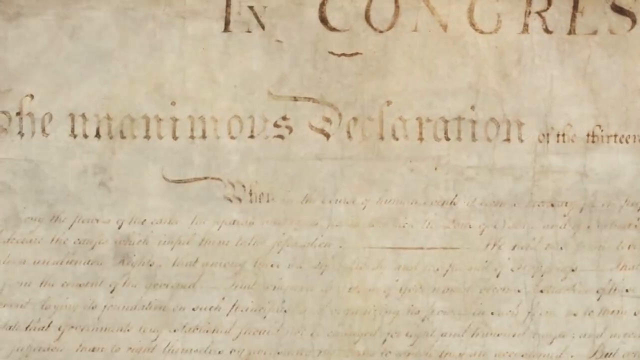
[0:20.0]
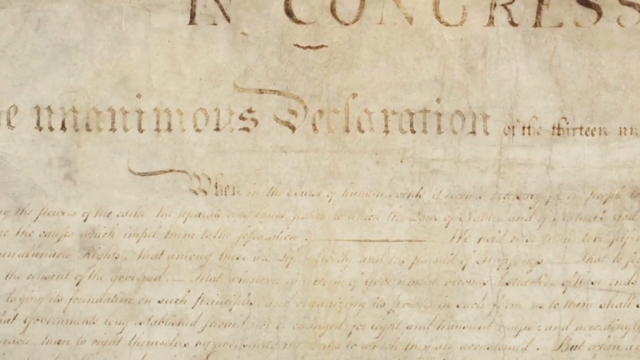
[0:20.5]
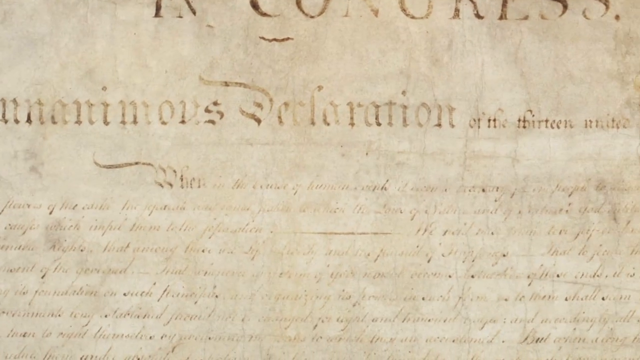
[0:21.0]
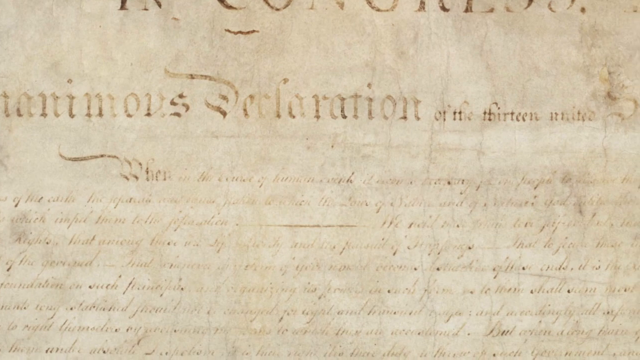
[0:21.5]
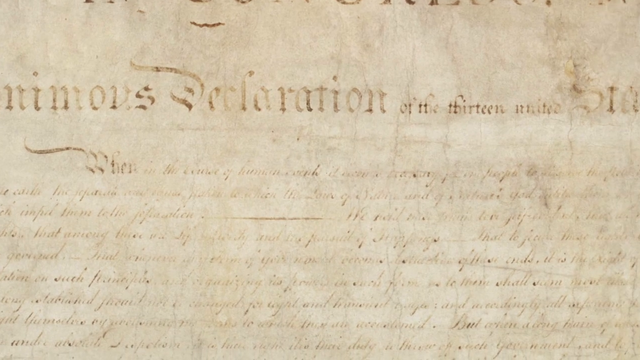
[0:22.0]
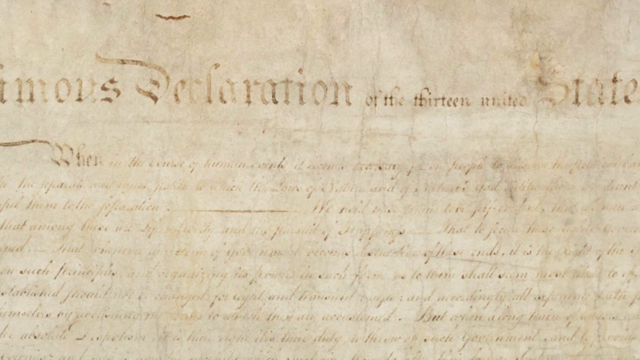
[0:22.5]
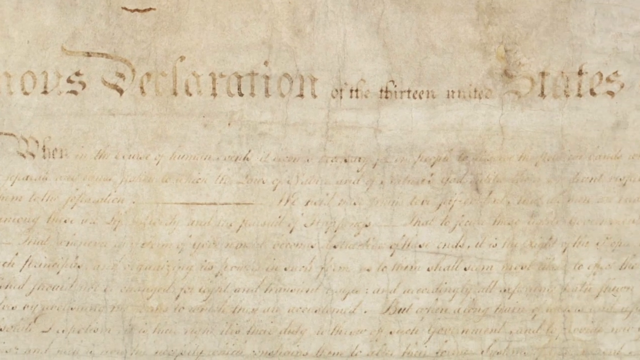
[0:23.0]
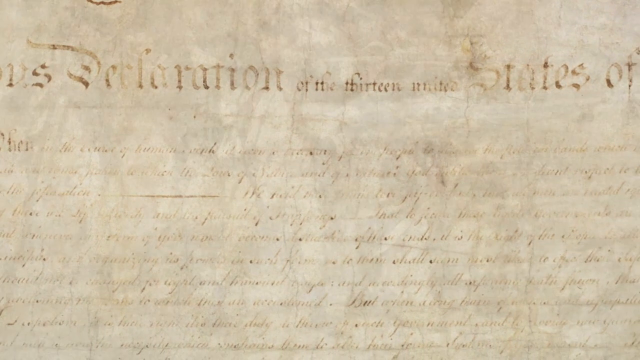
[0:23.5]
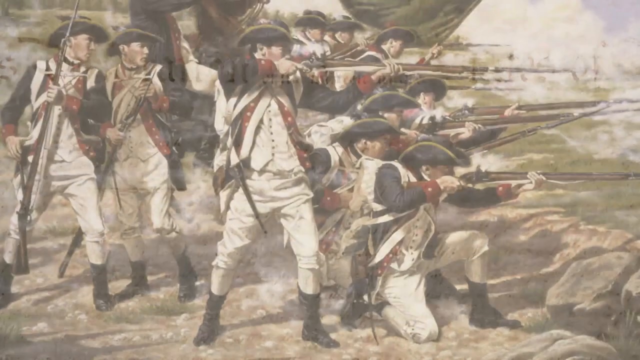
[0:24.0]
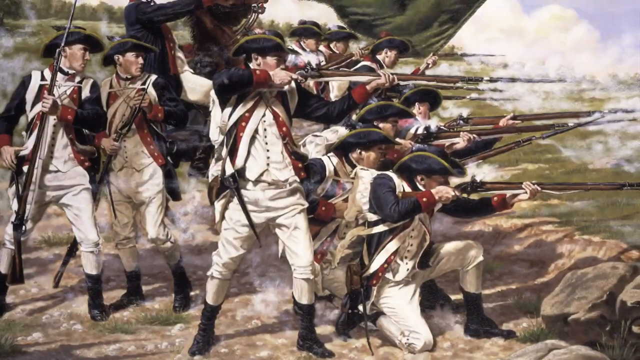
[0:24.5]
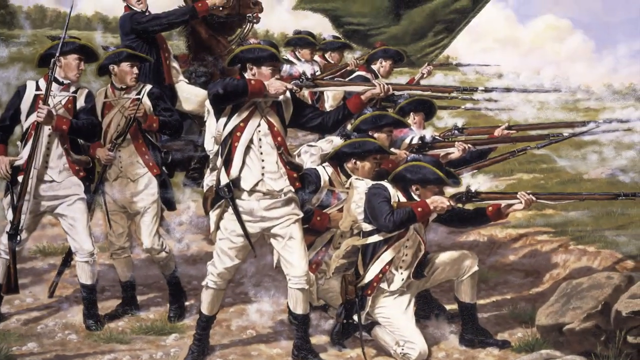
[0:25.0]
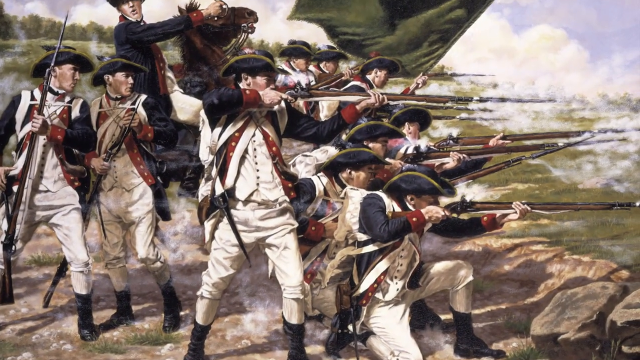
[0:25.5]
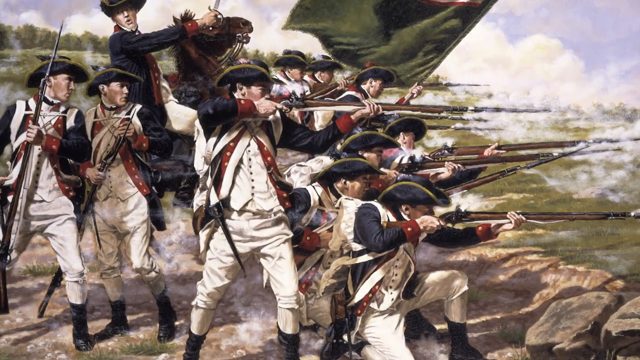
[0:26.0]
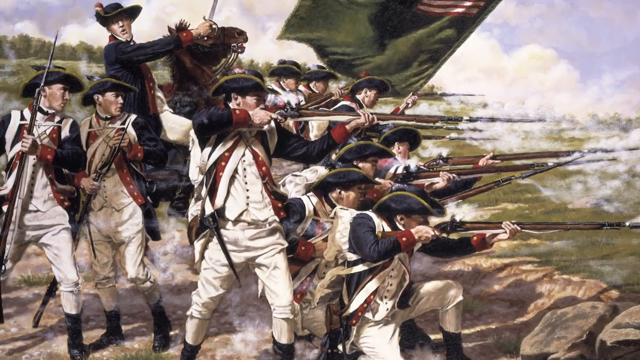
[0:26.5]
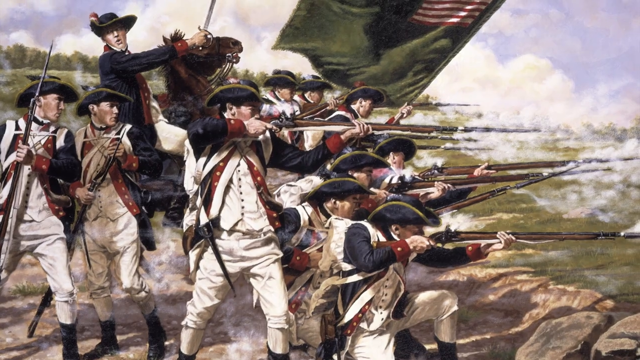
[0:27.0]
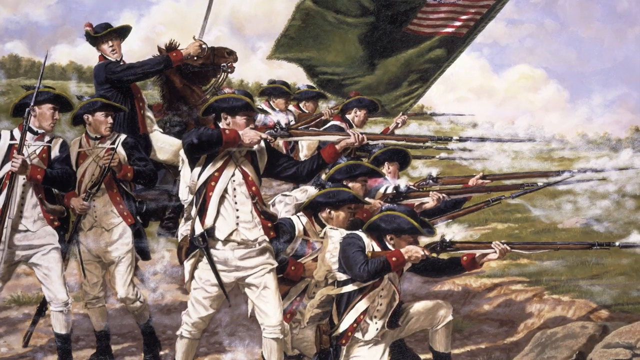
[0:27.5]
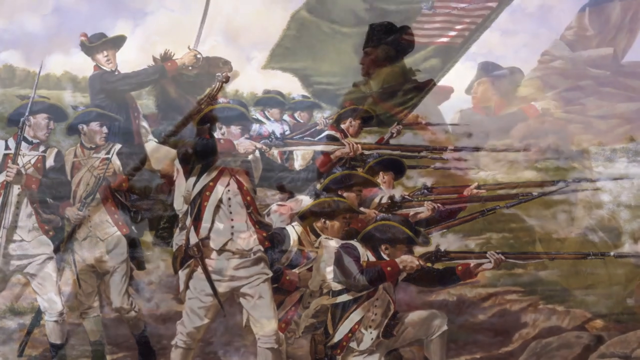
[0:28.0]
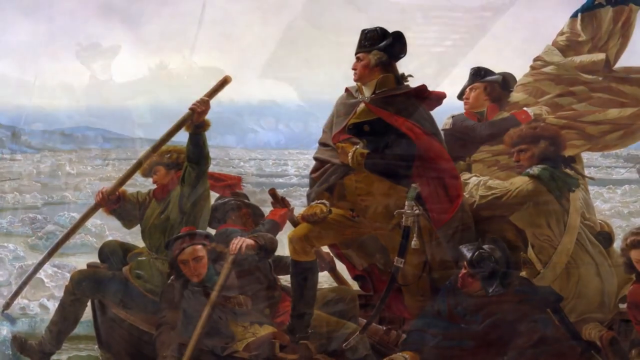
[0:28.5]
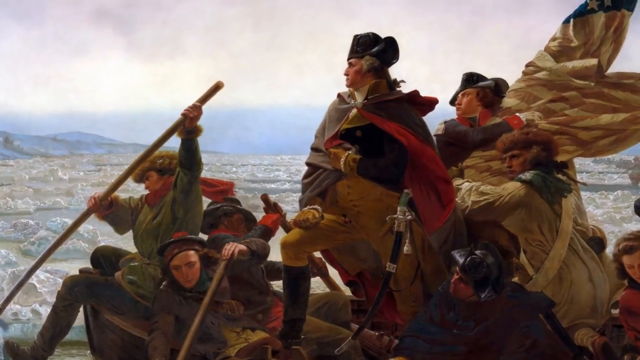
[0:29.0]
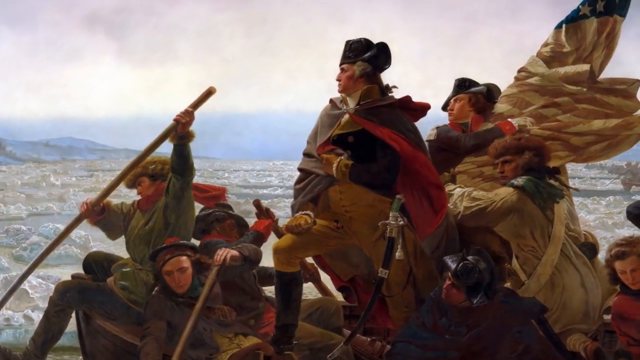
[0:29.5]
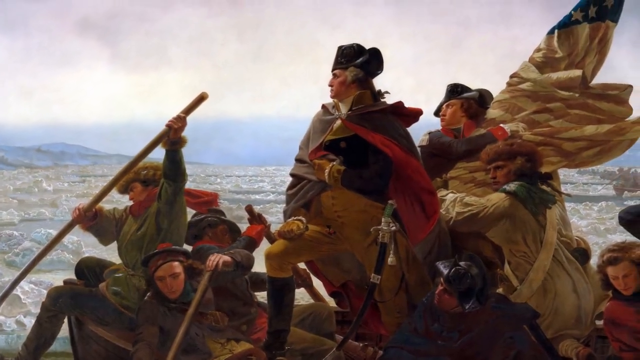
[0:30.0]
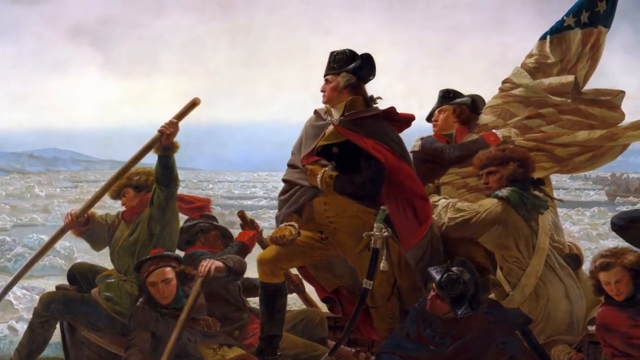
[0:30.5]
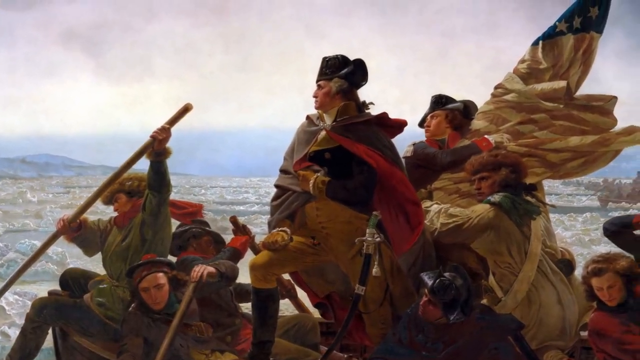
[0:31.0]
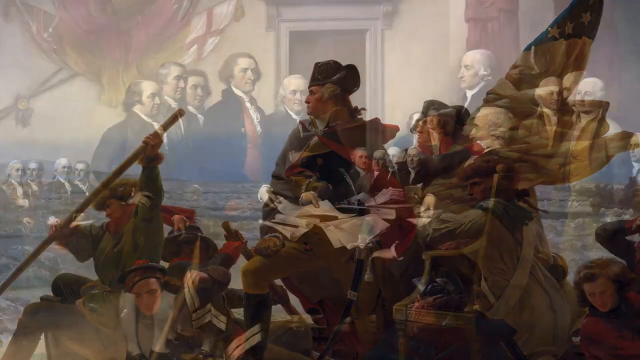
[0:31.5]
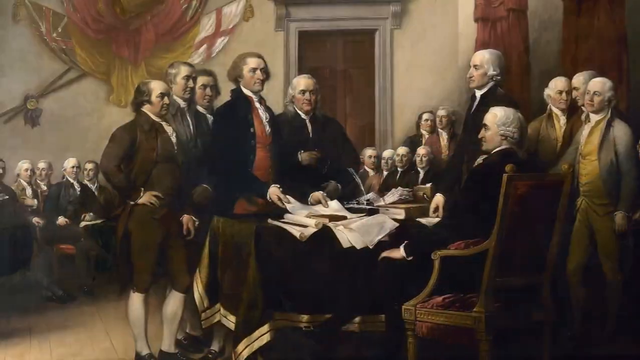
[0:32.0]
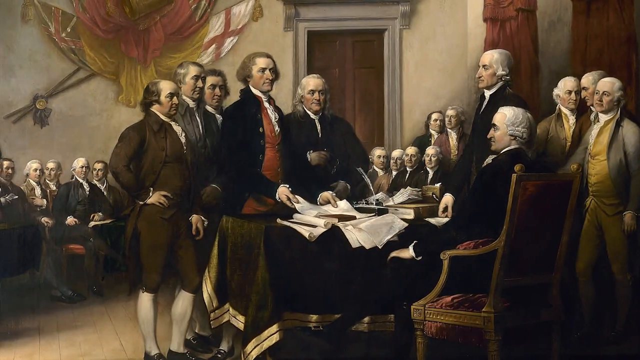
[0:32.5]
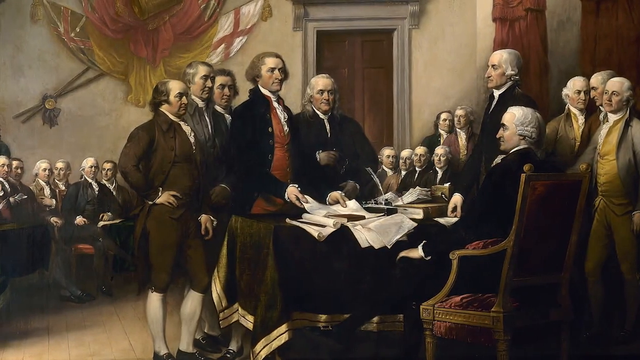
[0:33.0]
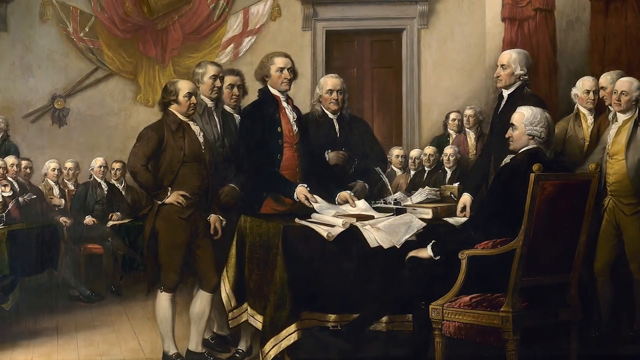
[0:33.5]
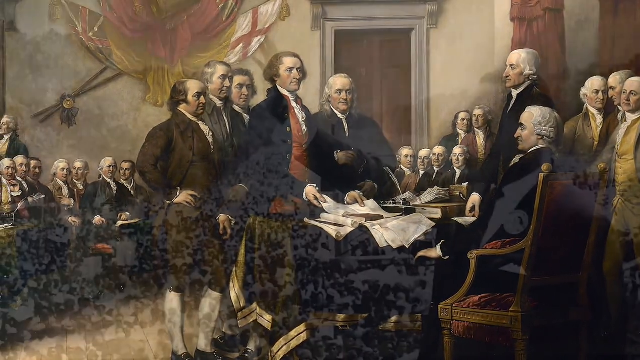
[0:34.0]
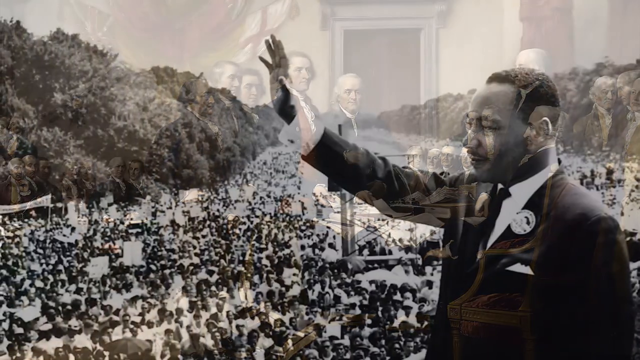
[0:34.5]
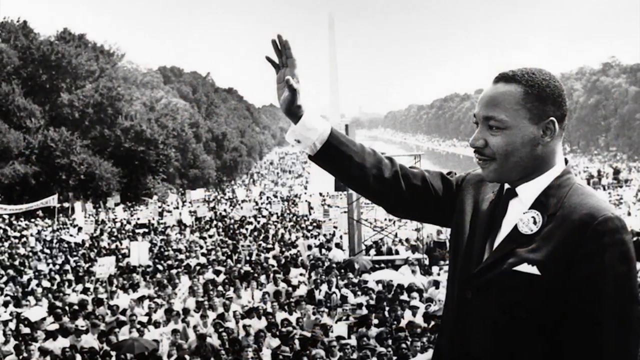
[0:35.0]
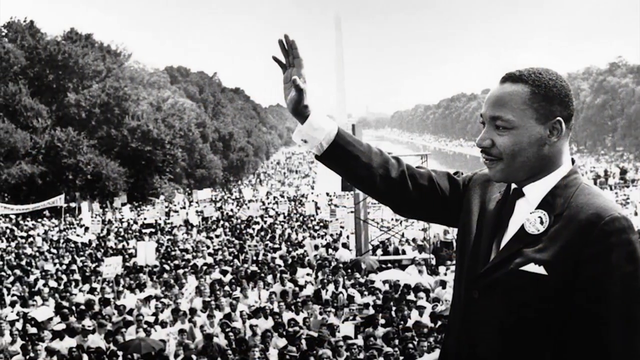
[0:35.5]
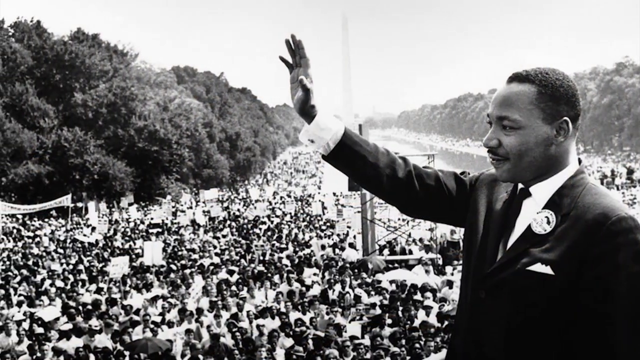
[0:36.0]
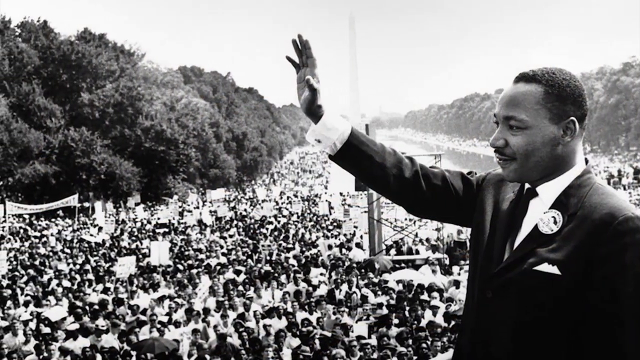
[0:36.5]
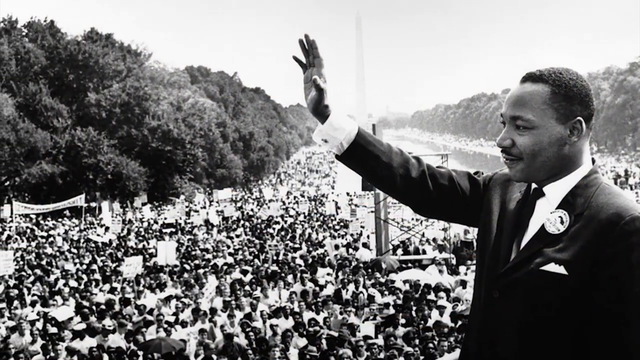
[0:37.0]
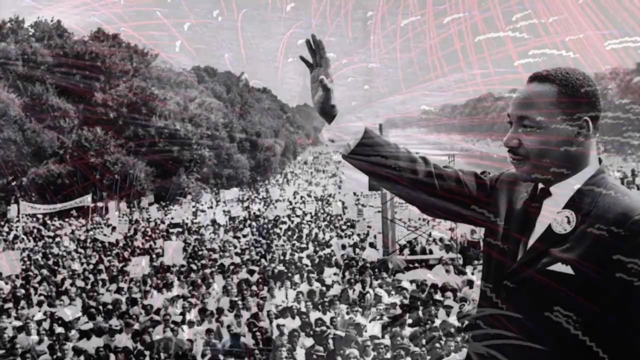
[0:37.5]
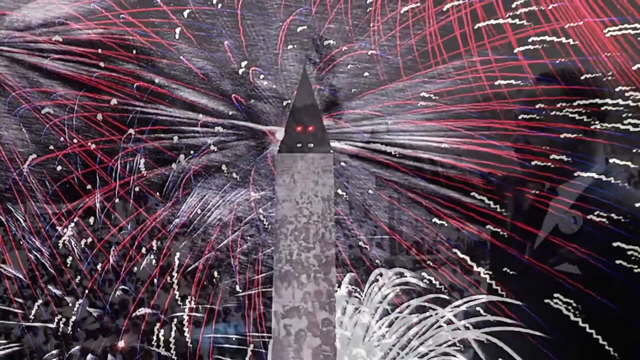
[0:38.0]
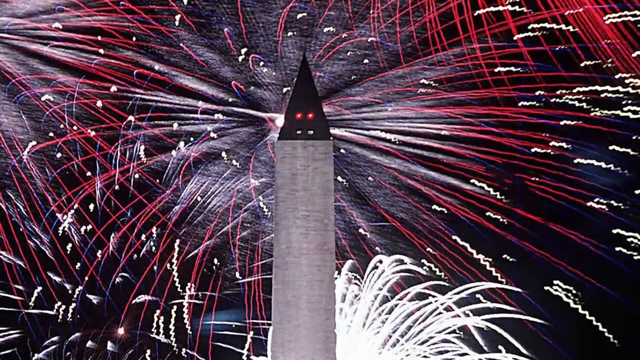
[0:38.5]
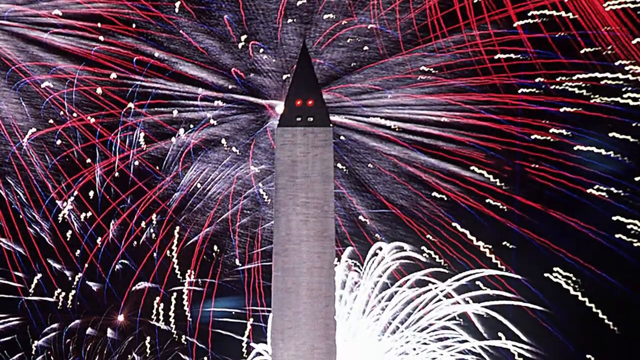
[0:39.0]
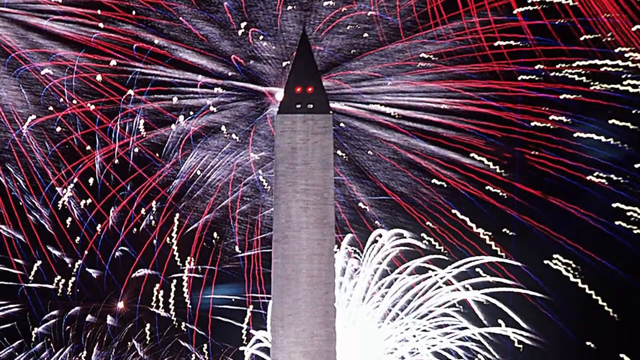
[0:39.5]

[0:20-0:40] A close-up of a copy of the Declaration of Independence is scanned from left to right. Next is a picture of American soldiers fighting the British, though the British are not visible; the close-up shows only the American soldiers in white pants, white socks, white vests, navy blue coats with red trim, and black three-cornered hats. They all face right with their muskets and seem to have just fired, as white clouds are coming from the muskets. In the back, a commander on a brown horse holds a sword in his right hand, pointing forward and looking at his men, and in front of him is a green flag with a miniature version of the colonial flag in the top right corner. Then comes a painting of George Washington crossing the Delaware, scanned from bottom left to top right, followed by another painting of the signing of the Declaration of Independence. Next is a black and white photo of Martin Luther King Jr. giving his speech in Washington, D.C. Finally, the Washington Memorial appears with white and red fireworks behind it.